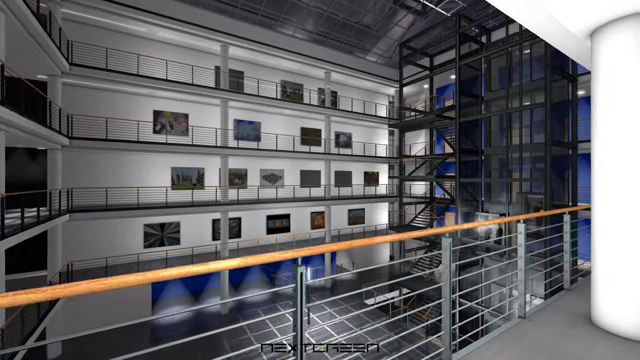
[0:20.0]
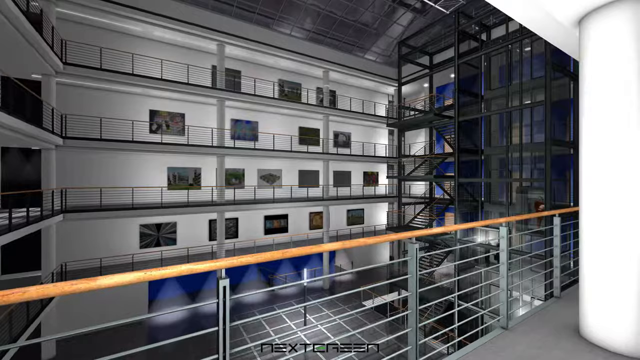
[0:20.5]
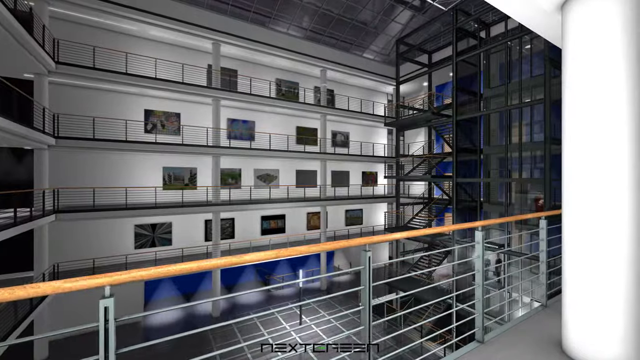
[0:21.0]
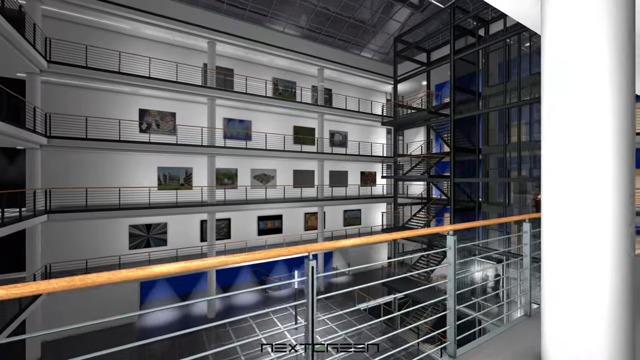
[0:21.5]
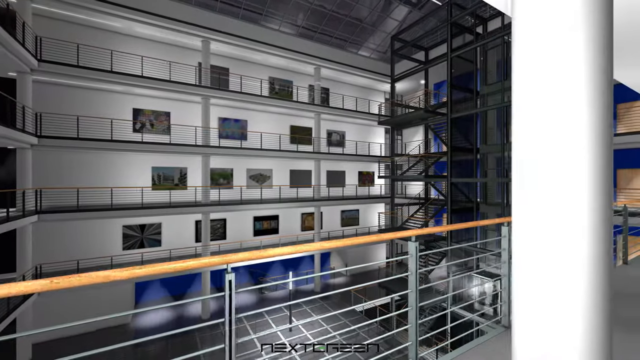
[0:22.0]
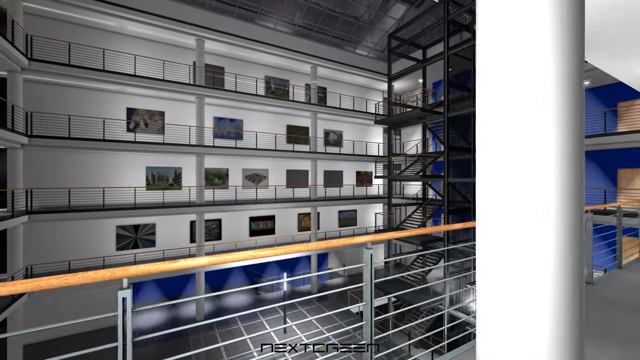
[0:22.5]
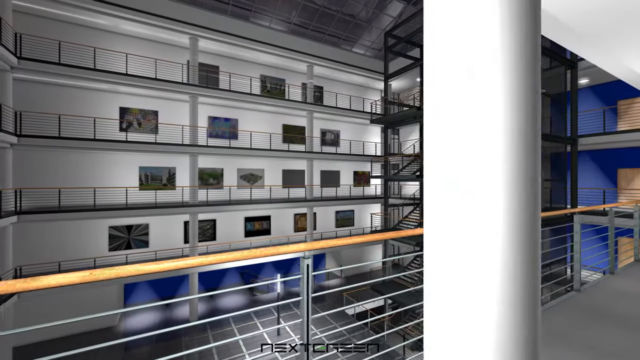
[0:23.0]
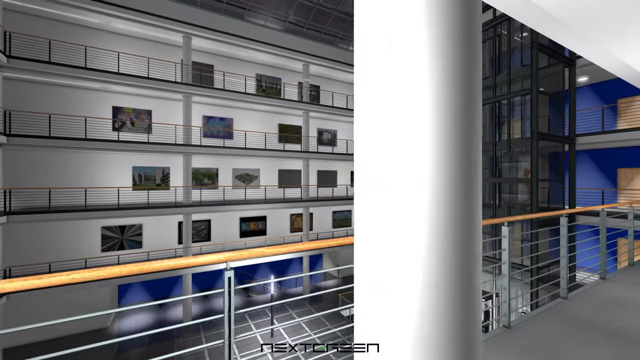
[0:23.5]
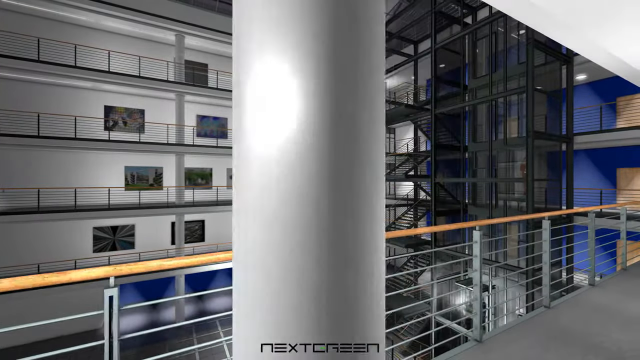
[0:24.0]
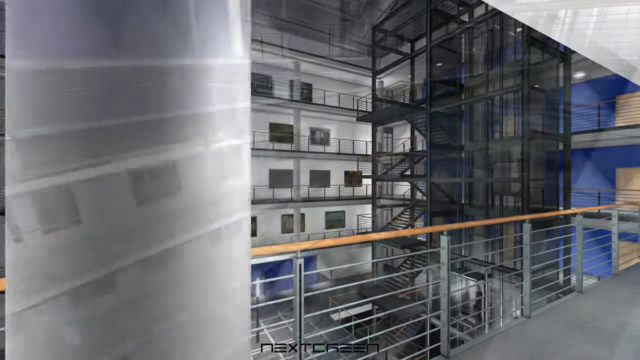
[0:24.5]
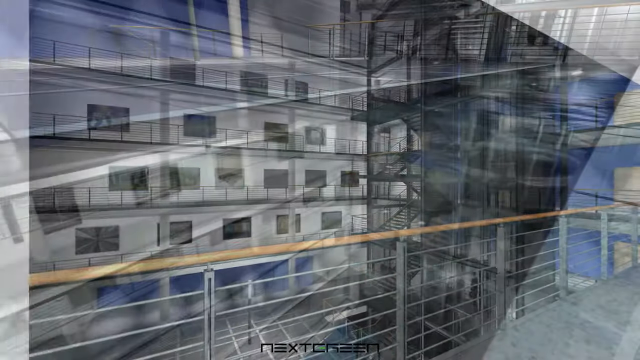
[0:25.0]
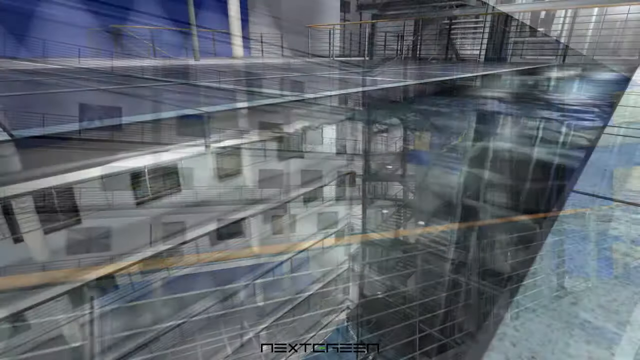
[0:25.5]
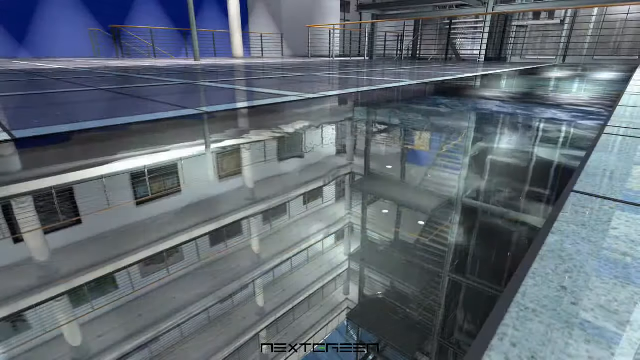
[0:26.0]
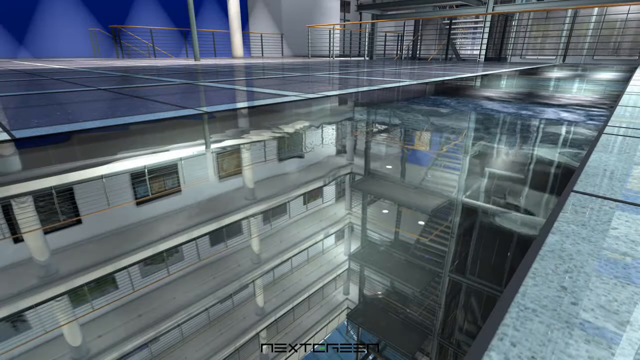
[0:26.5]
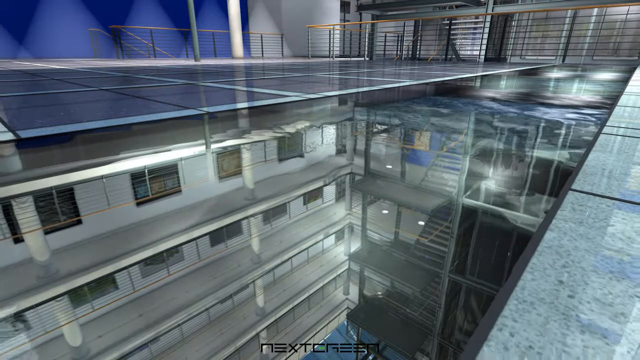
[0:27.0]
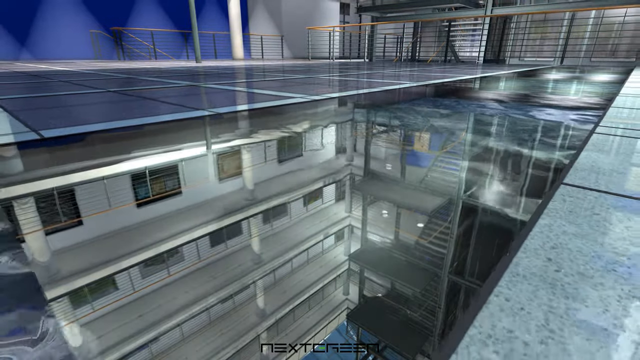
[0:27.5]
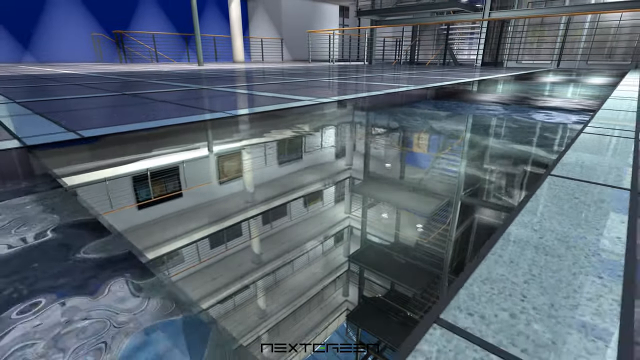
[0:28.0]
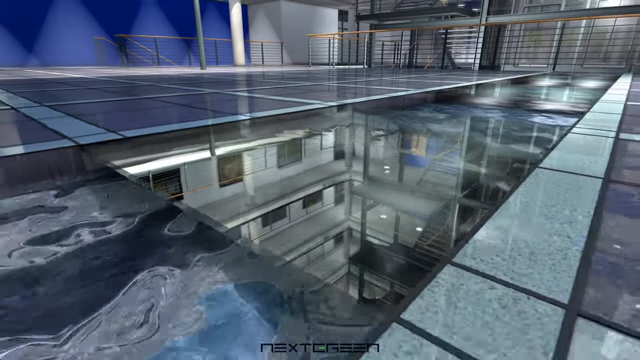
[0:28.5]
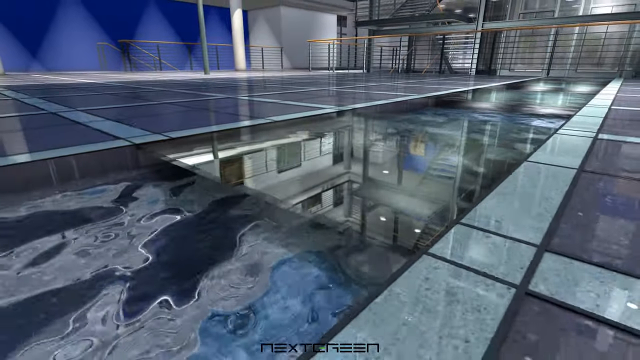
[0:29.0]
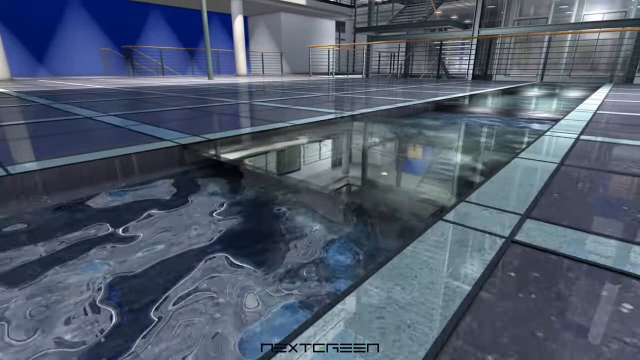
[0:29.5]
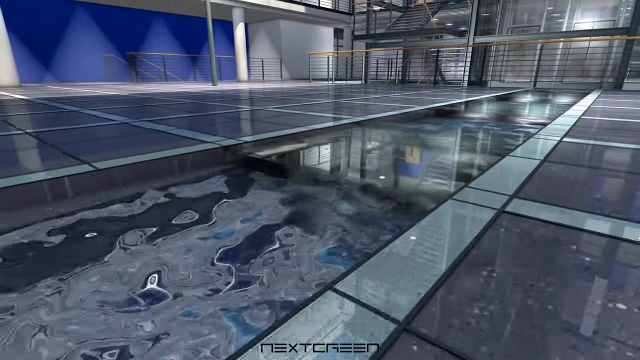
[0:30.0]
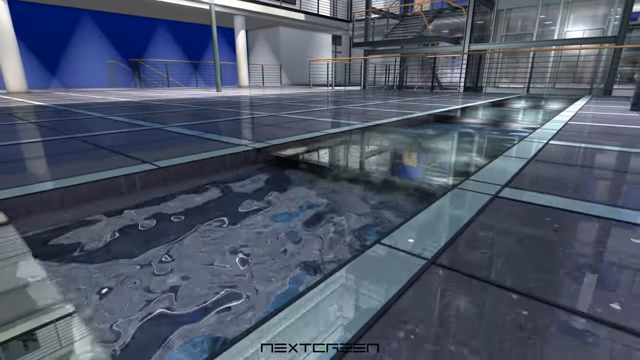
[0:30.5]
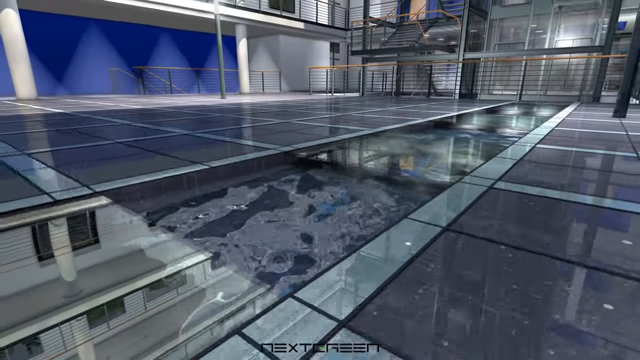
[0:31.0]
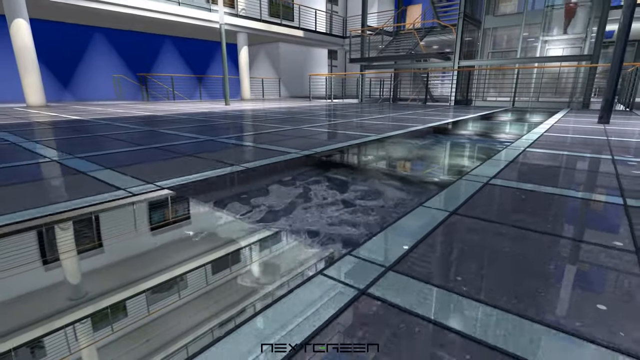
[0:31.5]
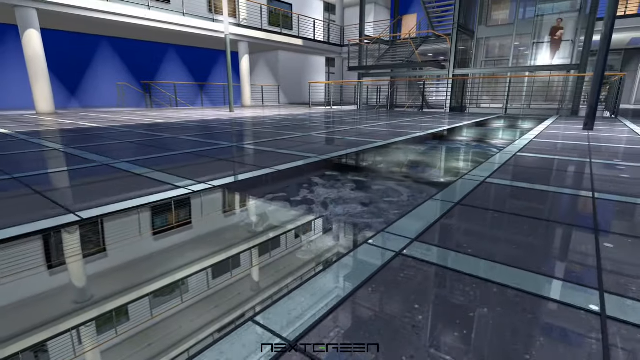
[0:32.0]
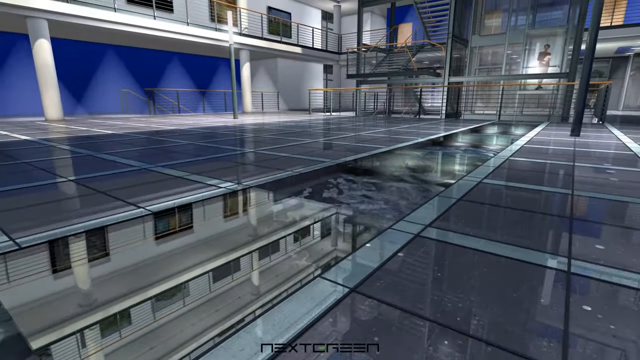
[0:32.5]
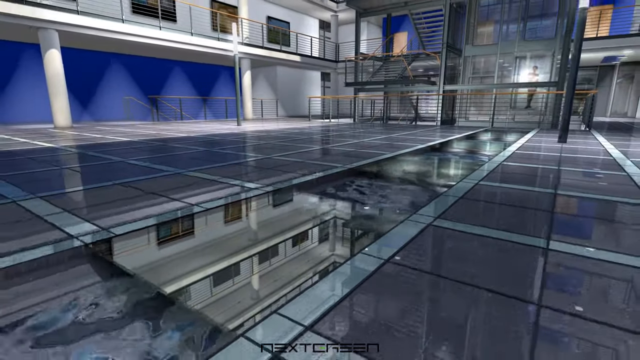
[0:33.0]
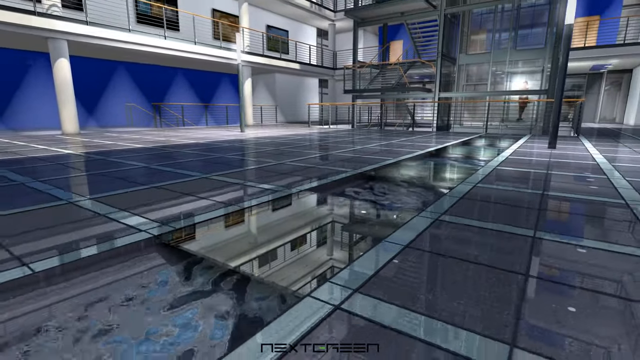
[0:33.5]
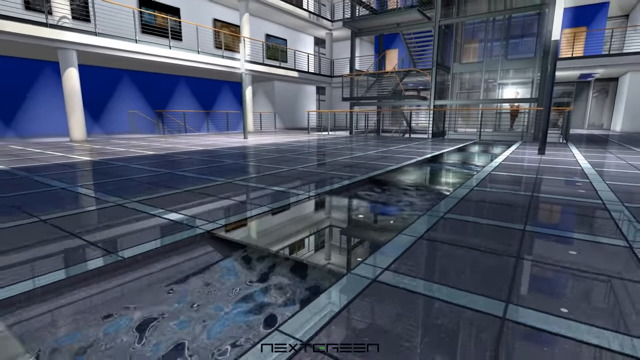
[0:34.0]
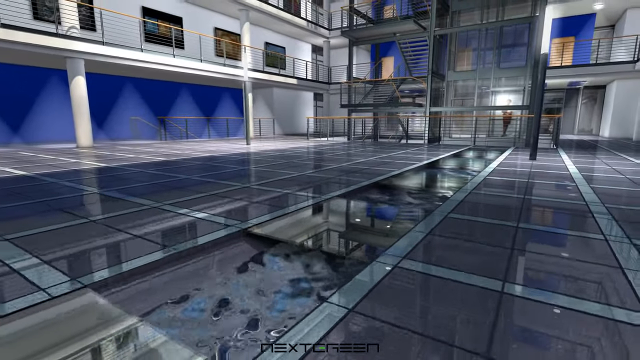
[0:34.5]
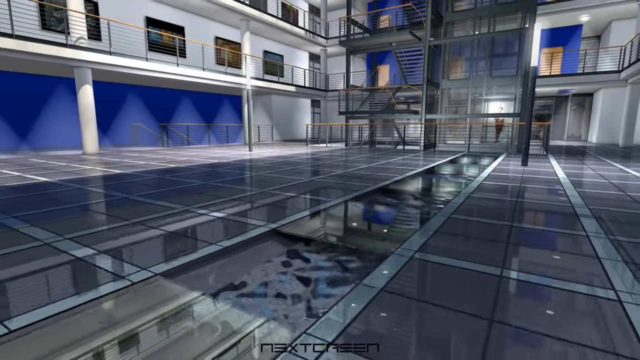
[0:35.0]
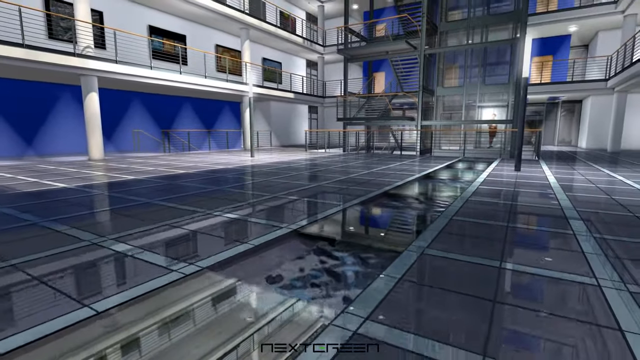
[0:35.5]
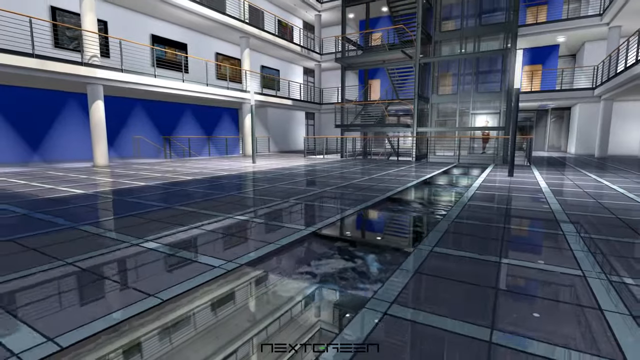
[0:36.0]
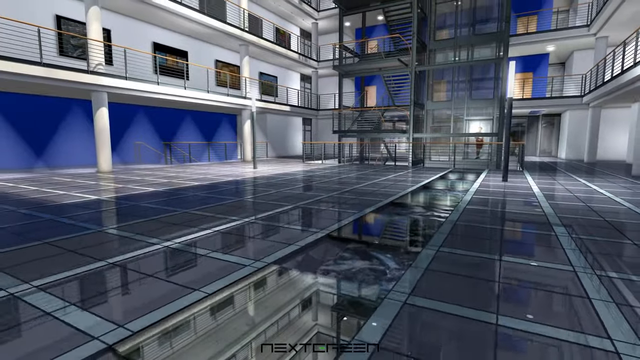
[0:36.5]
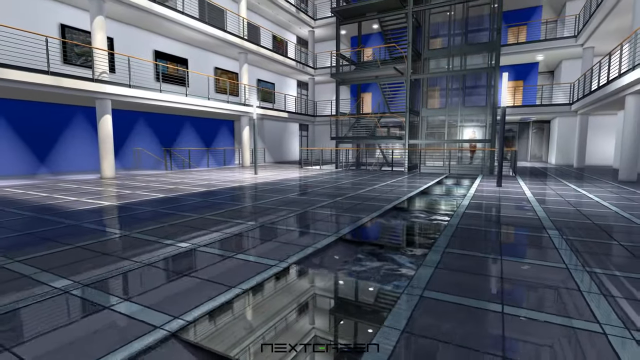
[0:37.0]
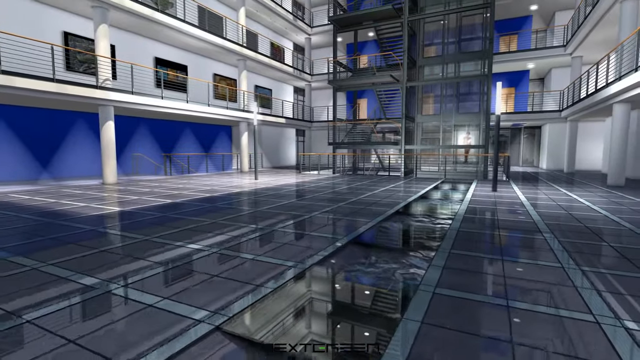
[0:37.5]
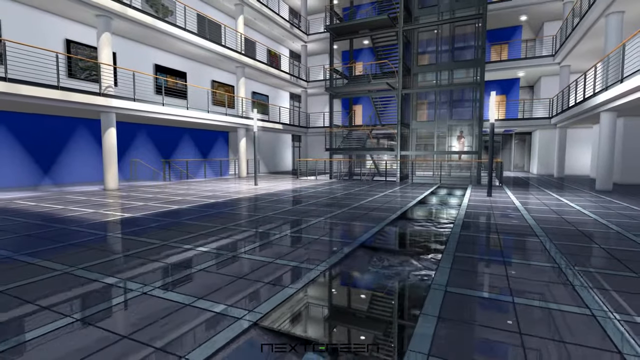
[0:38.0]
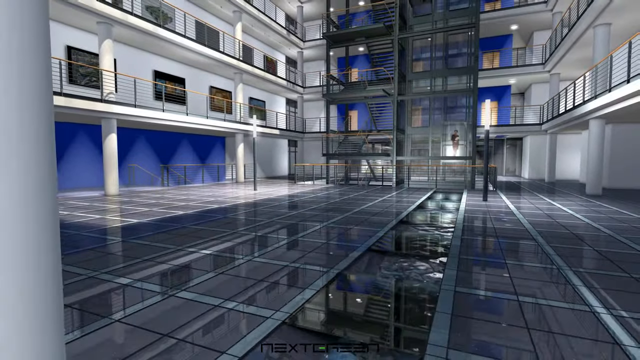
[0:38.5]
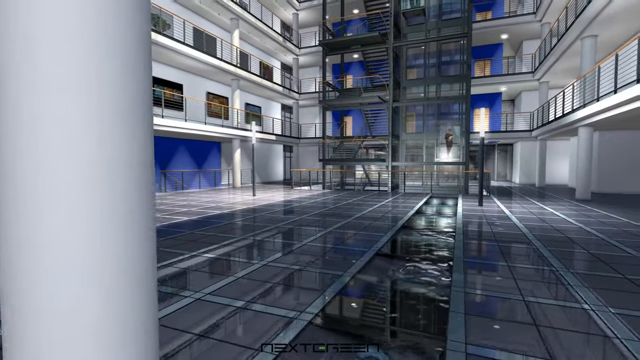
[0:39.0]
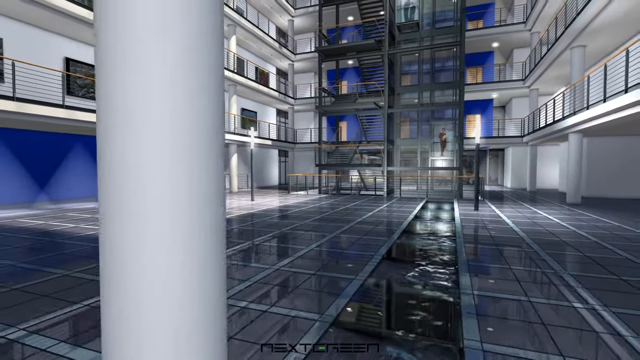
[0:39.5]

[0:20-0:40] The same computer-generated building is shown at night. It is very modern, with a very open design of five floors: a ground floor, first floor, second floor, third floor, and fourth floor. Each floor has a walkway and railing around it facing the vast open floor. There appears to be a channel of water, like a river, running through the floor on the first floor, with glass panels over certain parts of it to keep people from falling in. There are all sorts of strange paintings on the wall, almost like an art gallery, though the space seems to be more of an office building.